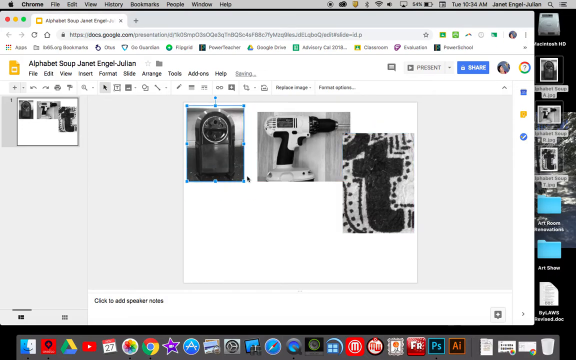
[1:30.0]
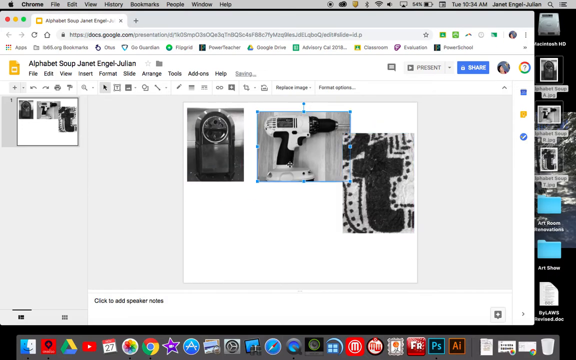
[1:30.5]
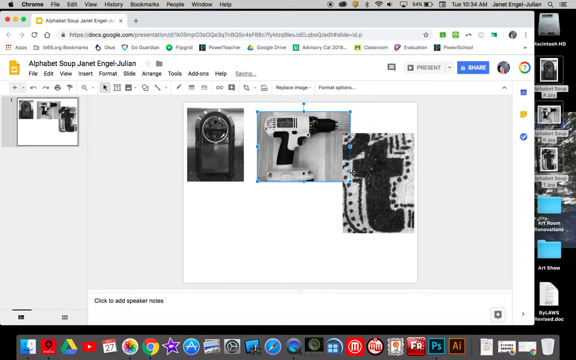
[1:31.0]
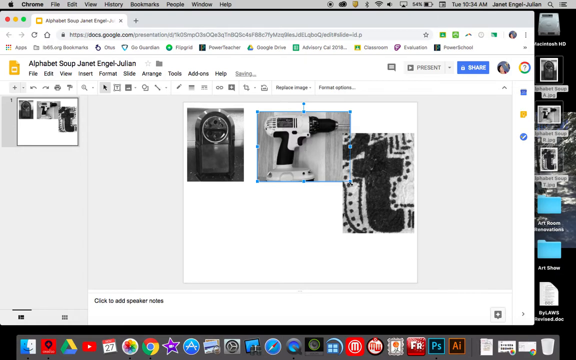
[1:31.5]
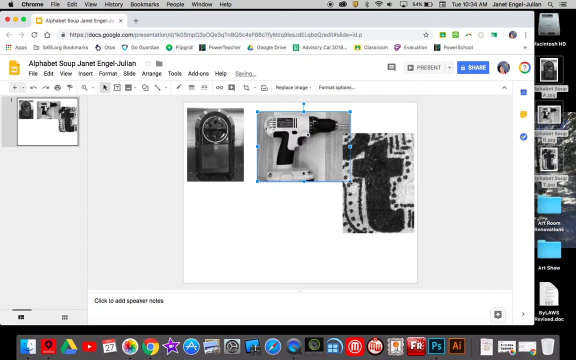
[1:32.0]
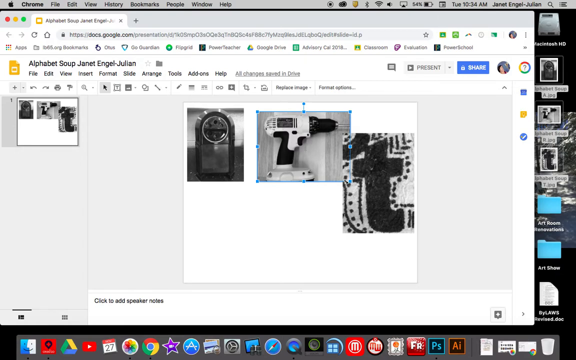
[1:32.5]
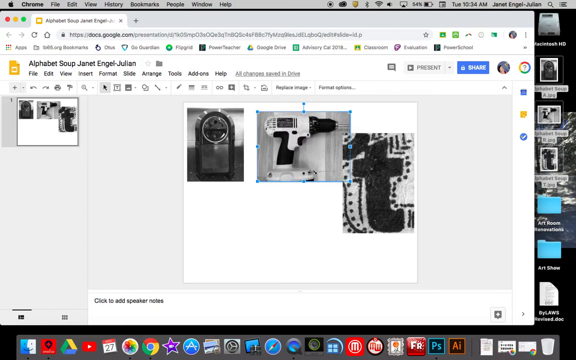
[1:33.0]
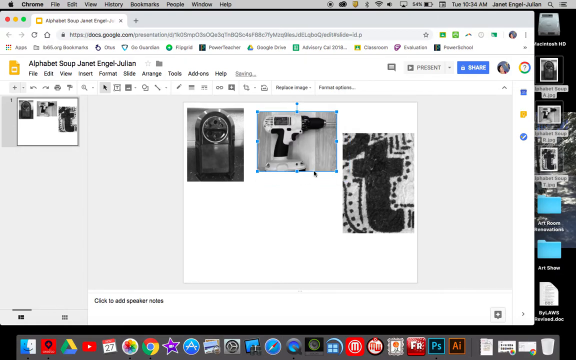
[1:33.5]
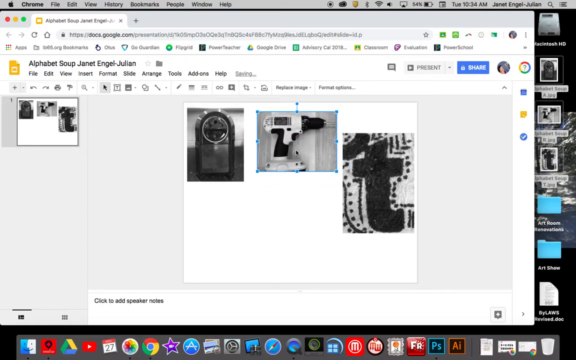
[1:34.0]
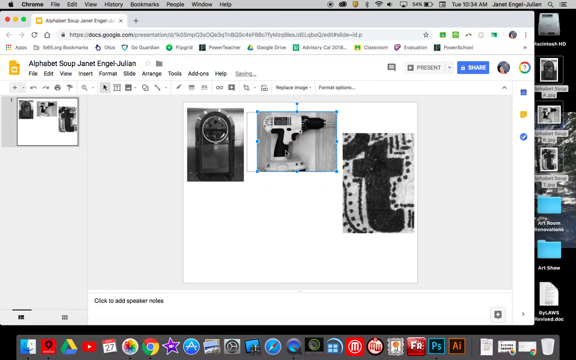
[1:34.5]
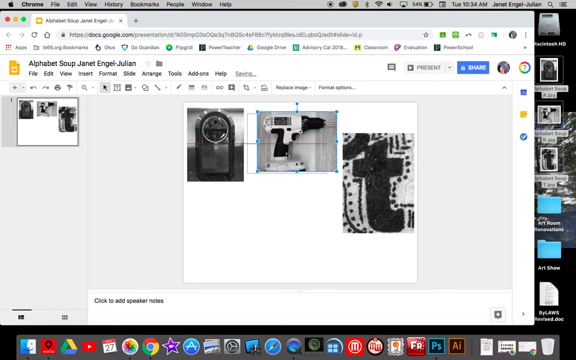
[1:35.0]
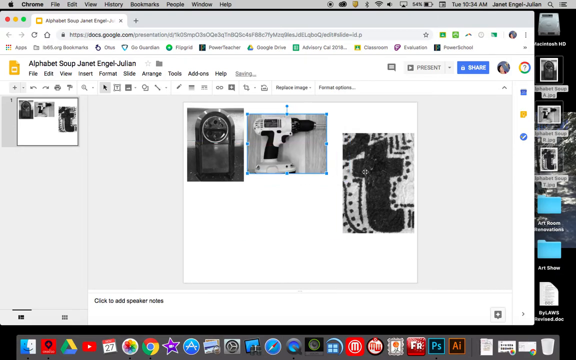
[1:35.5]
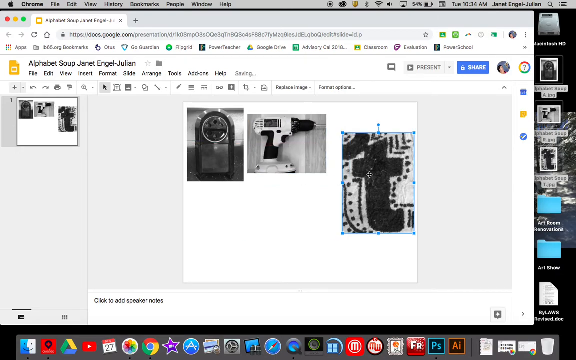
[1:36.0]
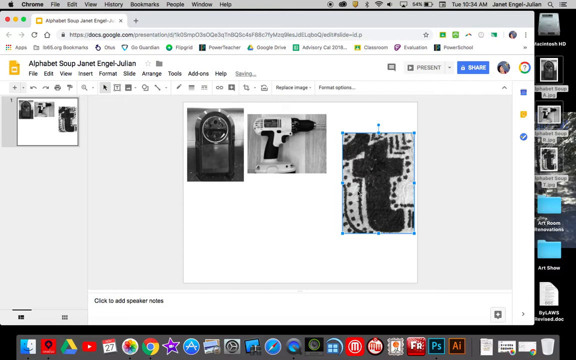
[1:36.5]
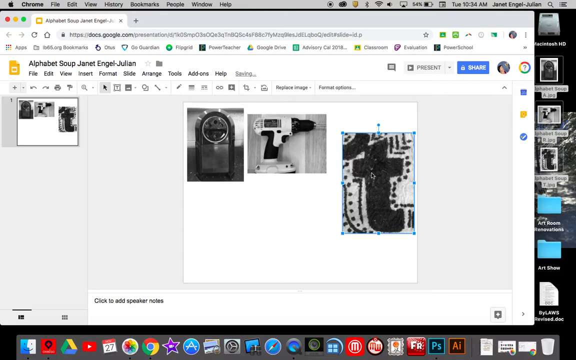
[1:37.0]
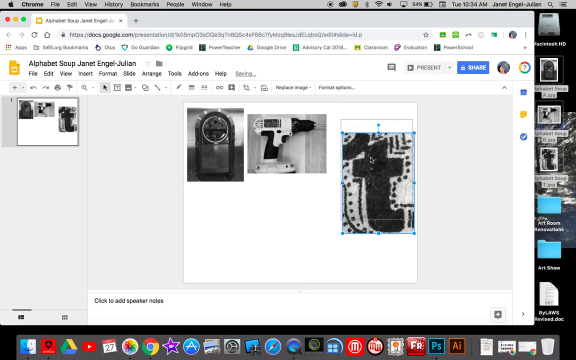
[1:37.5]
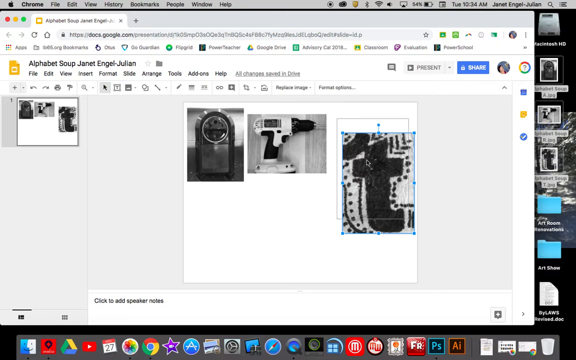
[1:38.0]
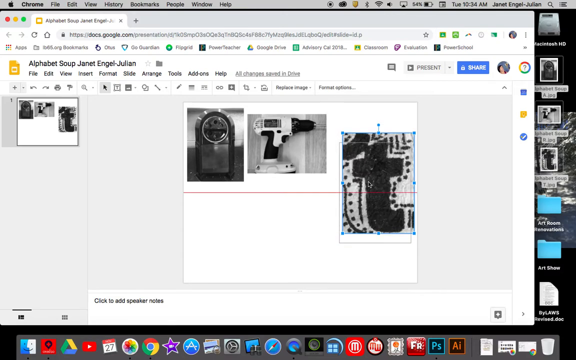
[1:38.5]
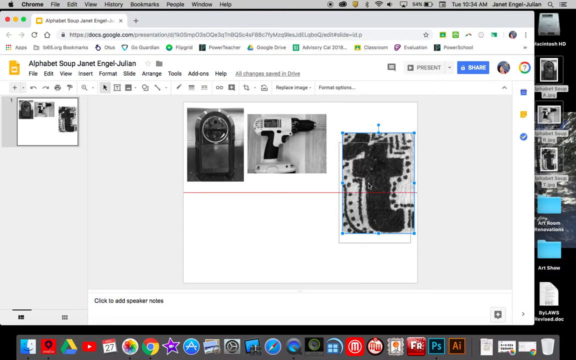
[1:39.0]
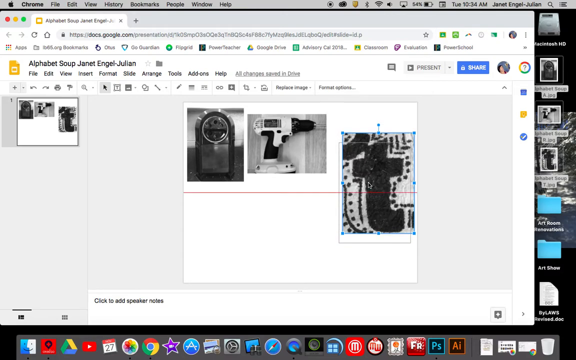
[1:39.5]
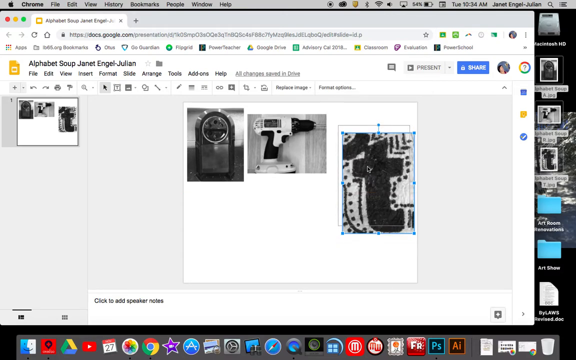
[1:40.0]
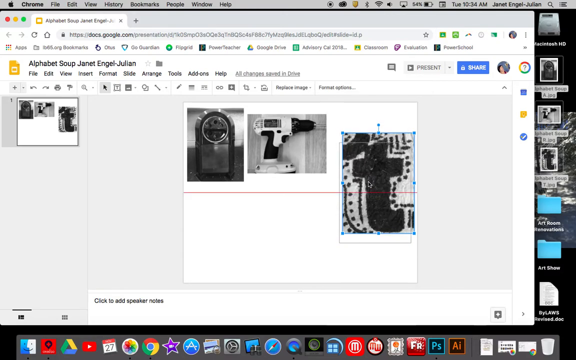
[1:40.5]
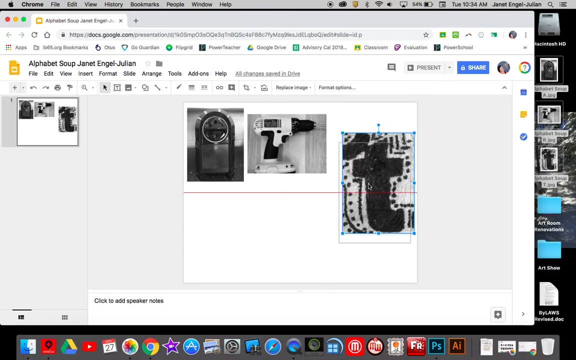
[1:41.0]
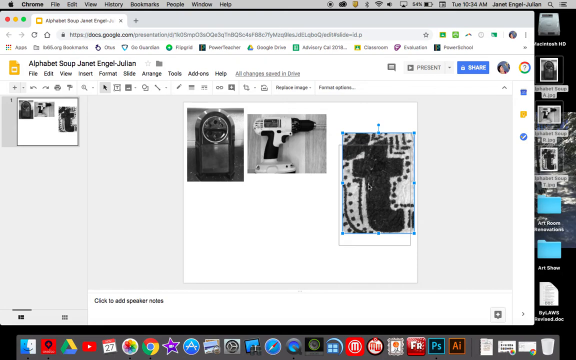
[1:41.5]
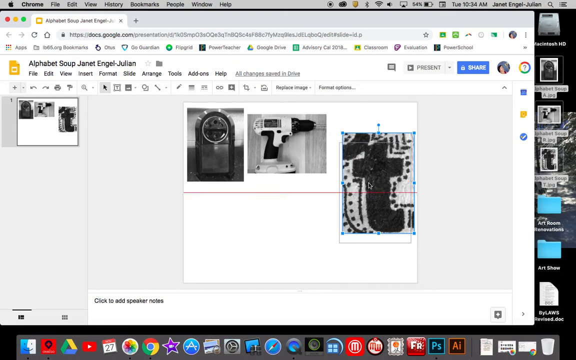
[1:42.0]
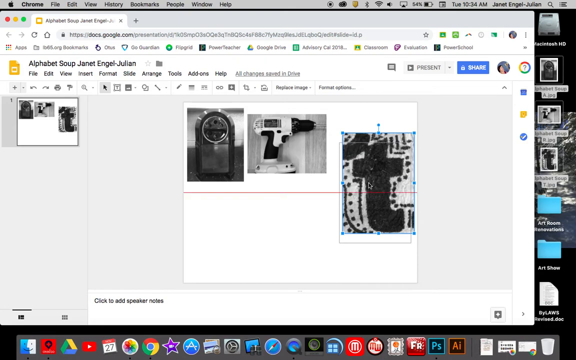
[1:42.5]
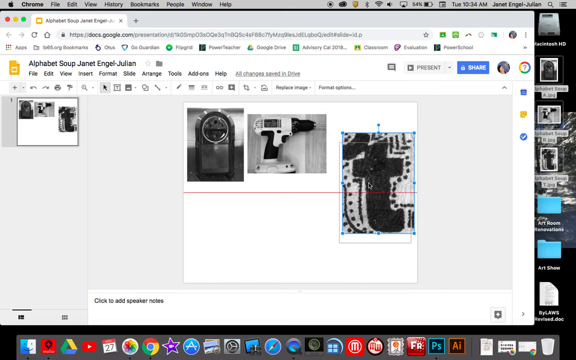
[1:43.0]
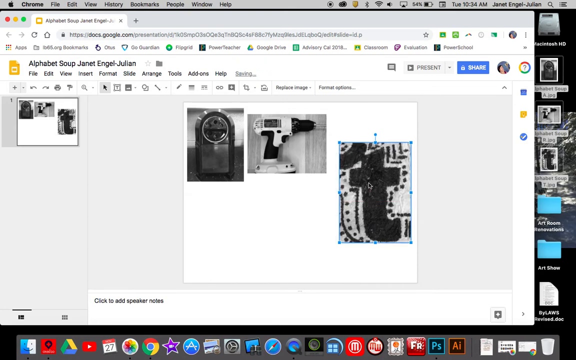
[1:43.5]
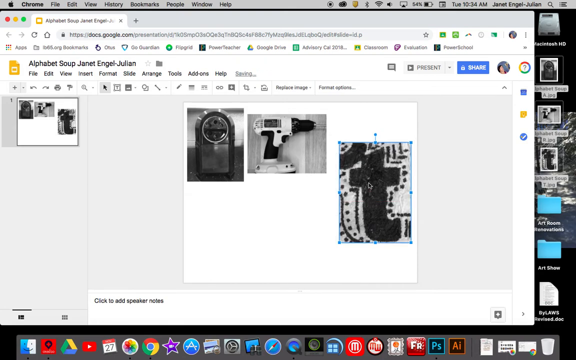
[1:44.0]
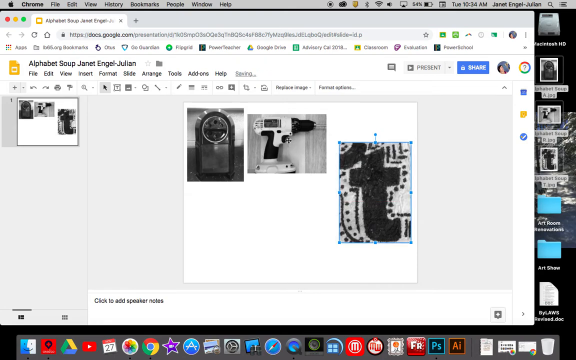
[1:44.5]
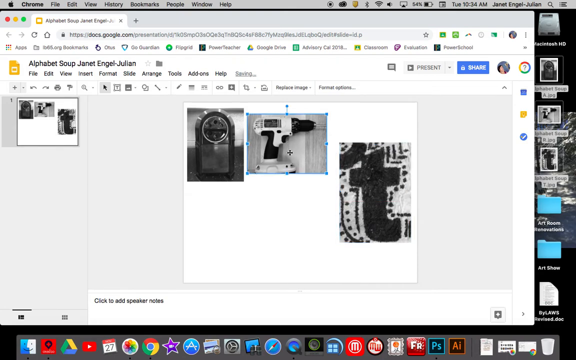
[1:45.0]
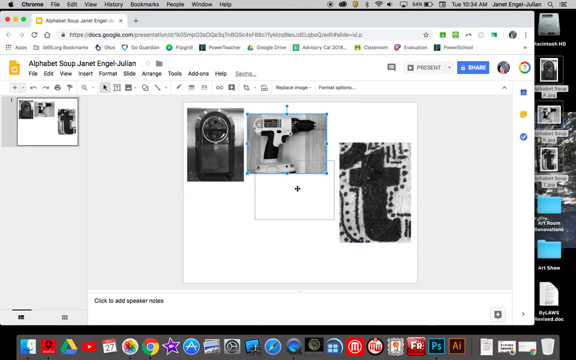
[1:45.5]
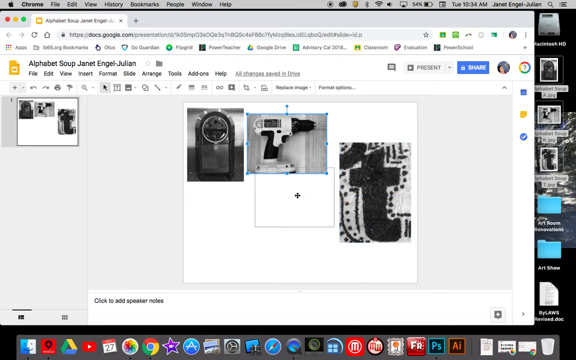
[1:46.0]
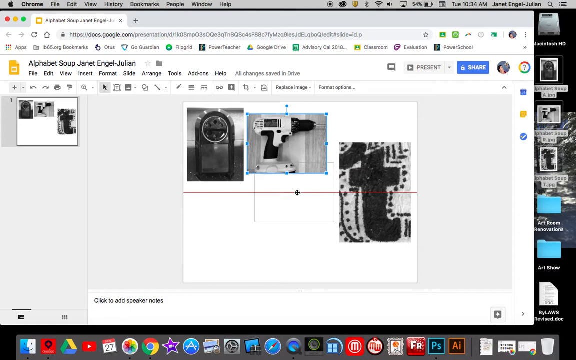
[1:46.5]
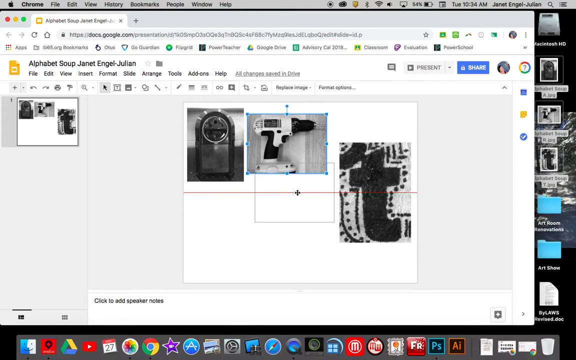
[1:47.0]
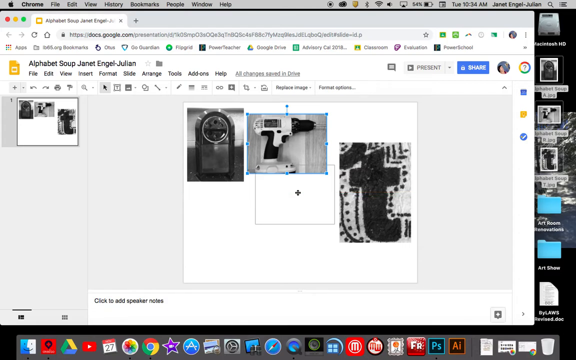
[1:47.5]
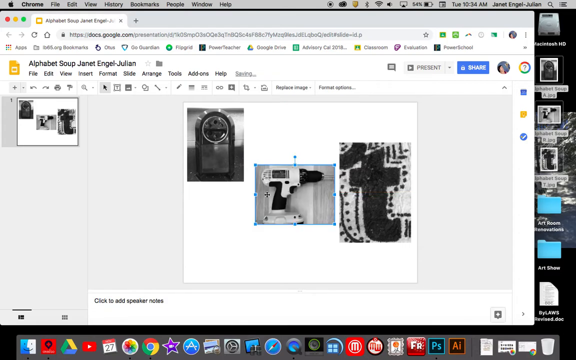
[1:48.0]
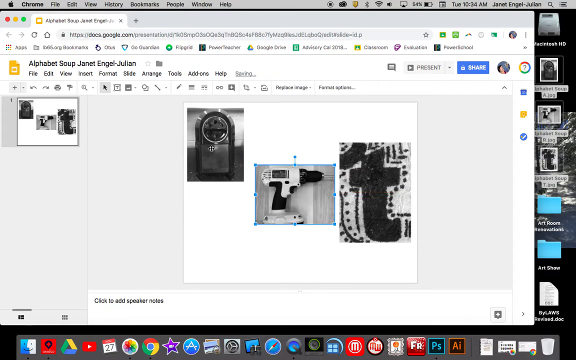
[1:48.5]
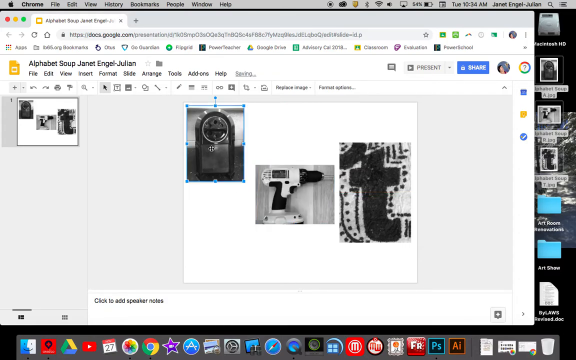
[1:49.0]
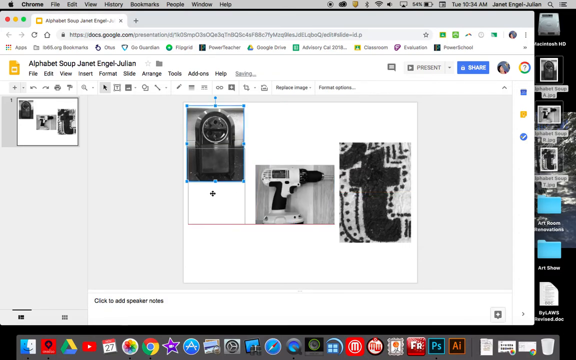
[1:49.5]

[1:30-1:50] An Apple Chrome browser shows a Google Docs page with a white page open and a piece of work titled "Alphabet Soup Jeanette Engel Julian". Three images are on the screen: the rightmost slightly overlaps the middle image on the right border, and the left image, just reduced in size, has a light blue box around it. The user drags the mouse right from the bottom of the first image onto the second image and clicks it; the blue outline leaves the first image and appears around the second. The user clicks the second image's bottom right corner, drags left and then slightly up to make it smaller, then drags it closer to the first image on the left. The user moves right and clicks the upper section of the black T in the third image, which highlights it in light blue, then drags the cursor upward and back down, up and down several times. When the mouse is over the center, a red line appears horizontally across the screen. The user deselects the T, moves left and up over the second image, clicks it and drags it downward to match the red horizontal center line, which appears when the mouse is over the correct part of the screen. The user then moves left, grabs the first image and moves it down until the horizontal red centering line appears once more.